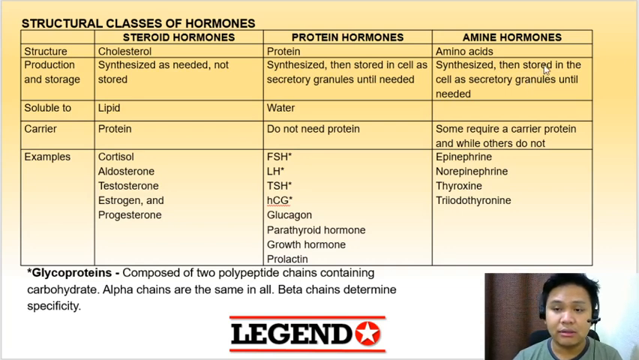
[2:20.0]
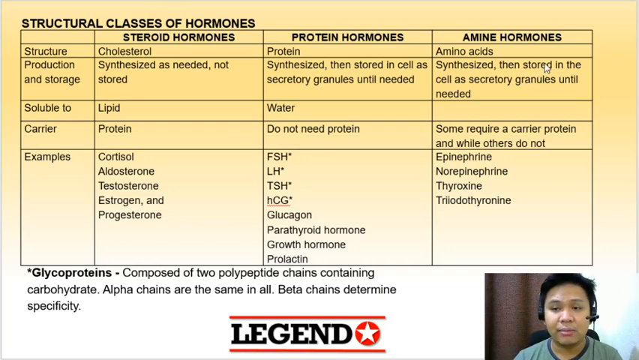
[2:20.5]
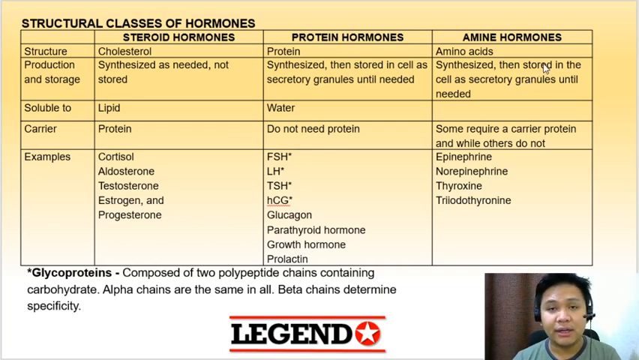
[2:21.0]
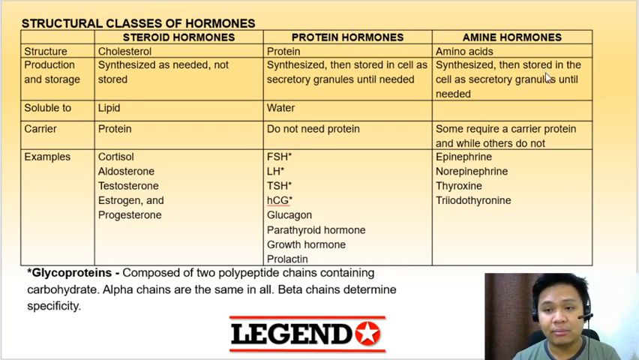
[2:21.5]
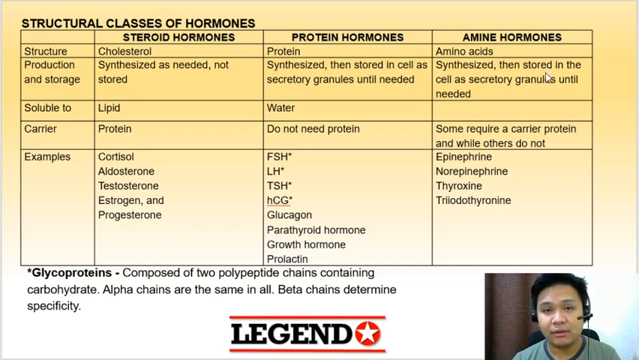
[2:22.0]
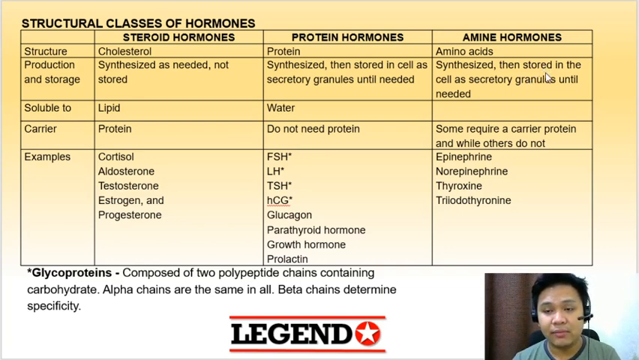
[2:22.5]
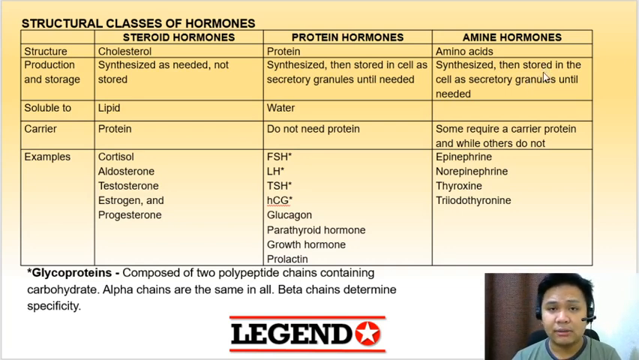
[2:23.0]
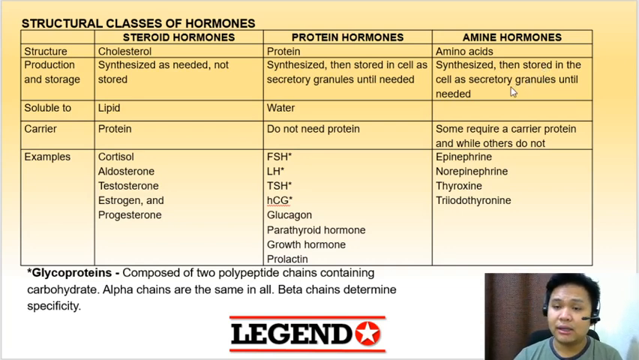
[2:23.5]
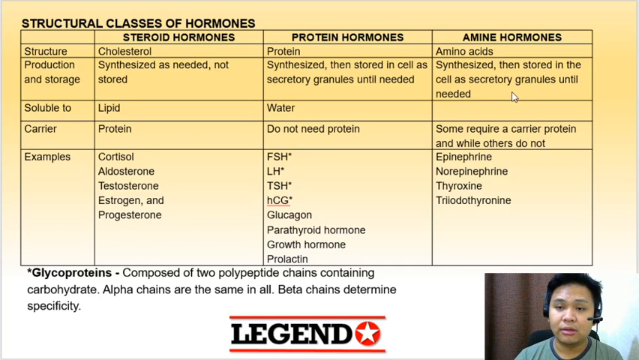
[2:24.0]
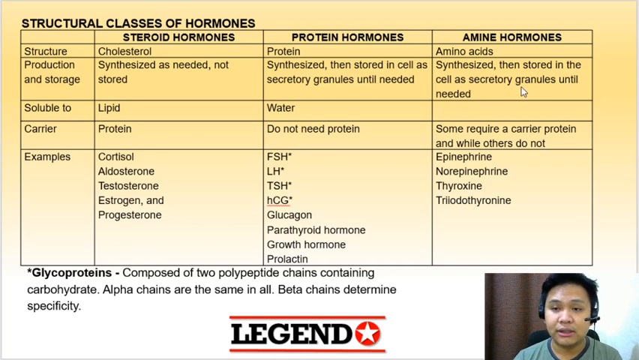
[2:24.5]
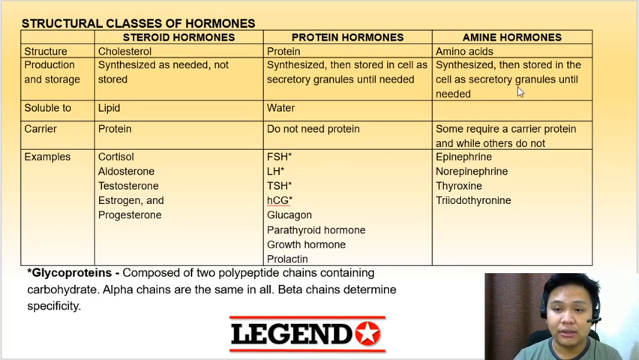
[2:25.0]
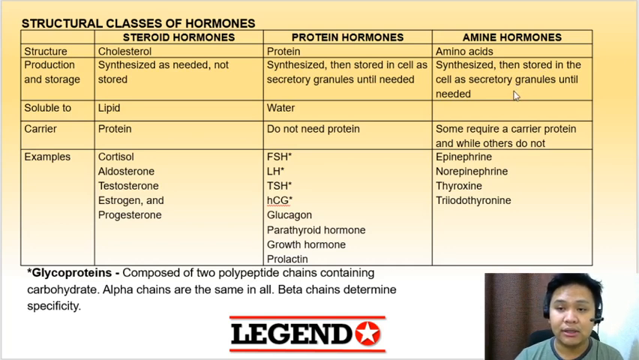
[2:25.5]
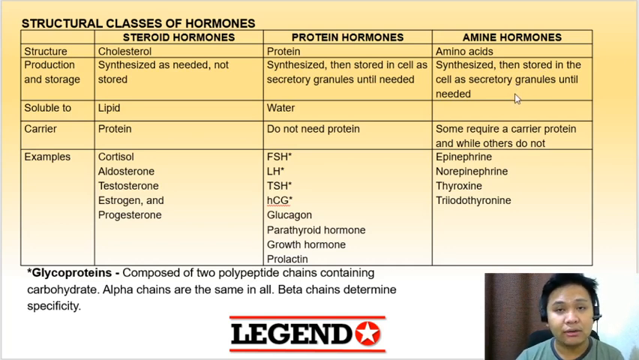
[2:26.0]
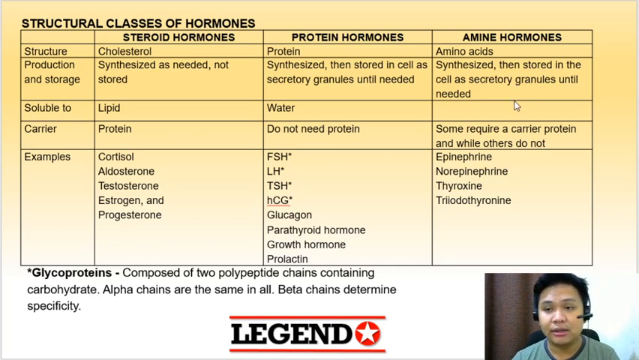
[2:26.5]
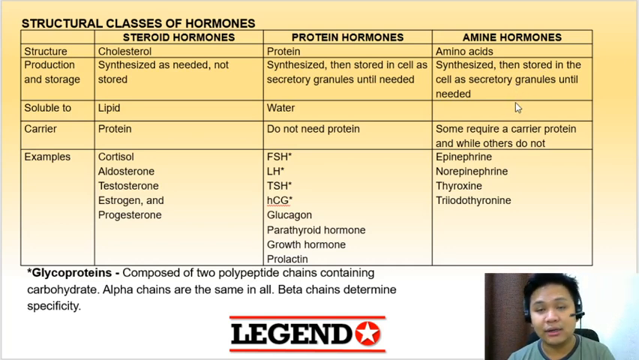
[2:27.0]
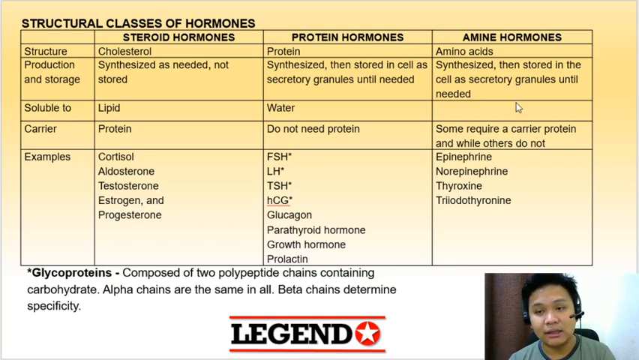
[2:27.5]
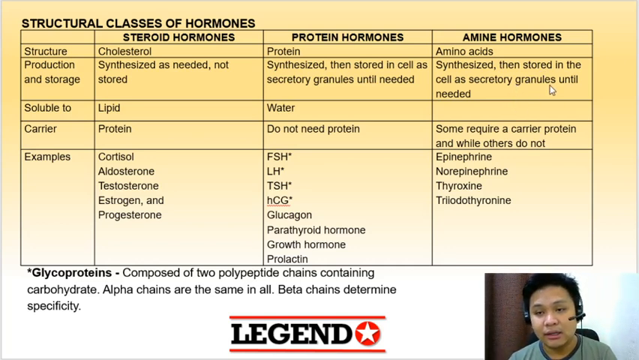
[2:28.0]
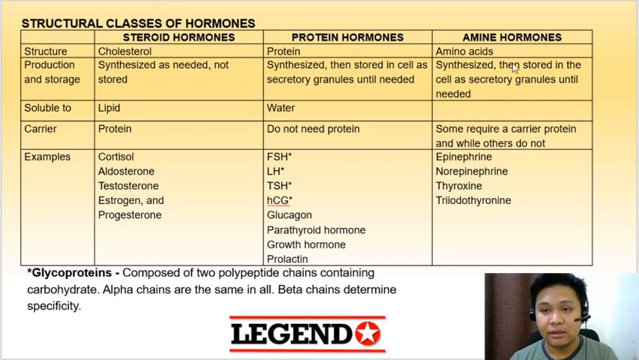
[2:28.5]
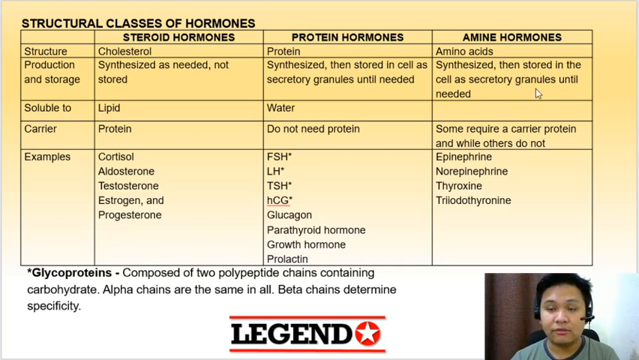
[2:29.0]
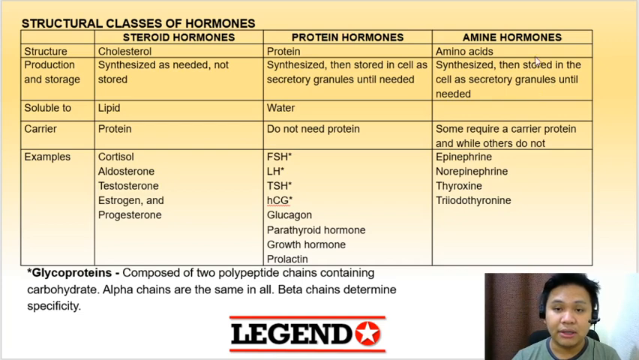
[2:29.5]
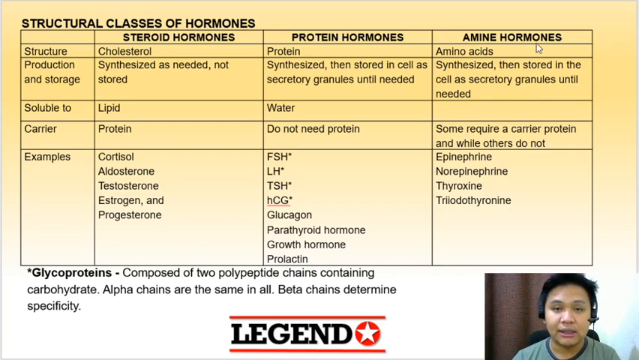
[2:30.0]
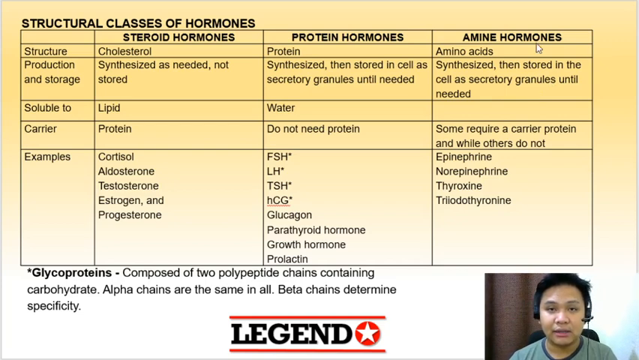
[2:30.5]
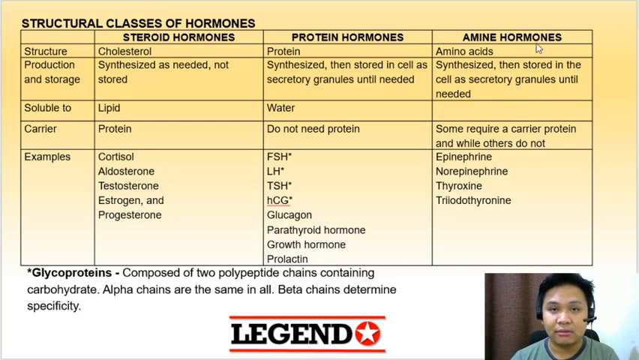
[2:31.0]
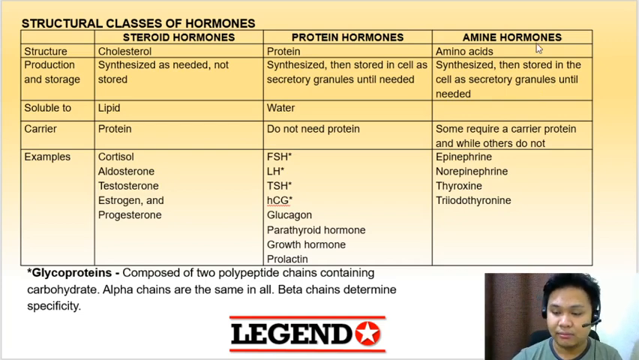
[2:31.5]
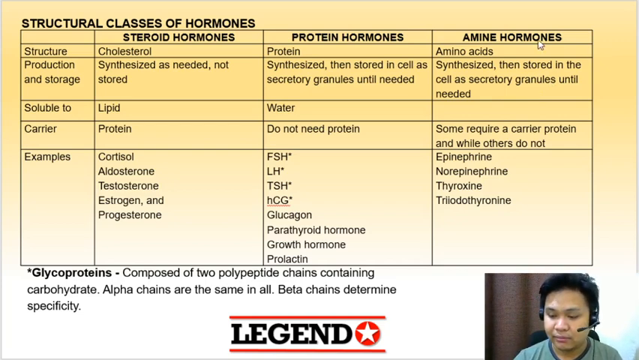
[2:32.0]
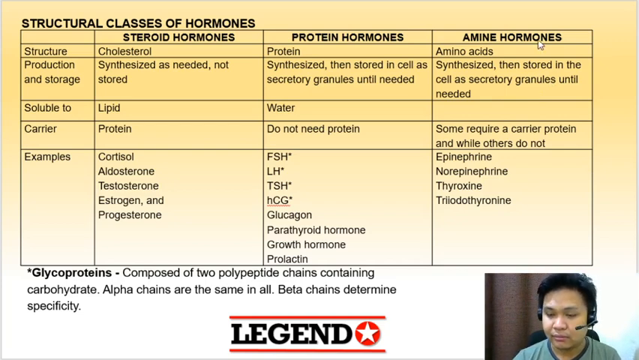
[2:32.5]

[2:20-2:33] The video shows the table on the structural classes of hormones: steroid hormones, protein hormones and amine hormones. A man in the bottom right corner appears to be explaining what is on the screen, and it looks as though he is sharing his screen, since the mouse arrow moves about on it. He looks as though he works for a company called Legend, as there is a logo in the middle of the screen at the bottom. The logo has the word Legend in red, green and black capital letters next to a red circle with a white five-pointed star, which appears to be some kind of logo, with a red line at the top and a red line underneath. The table lists steroid hormones as cholesterol, protein hormones as protein, and amine hormones as amino acids.